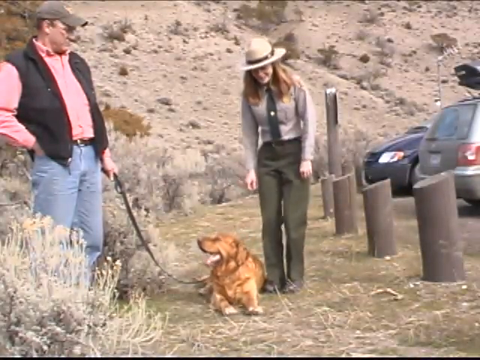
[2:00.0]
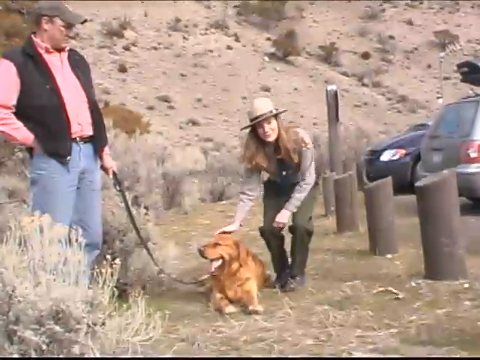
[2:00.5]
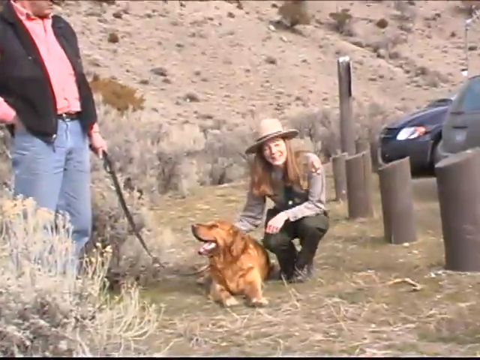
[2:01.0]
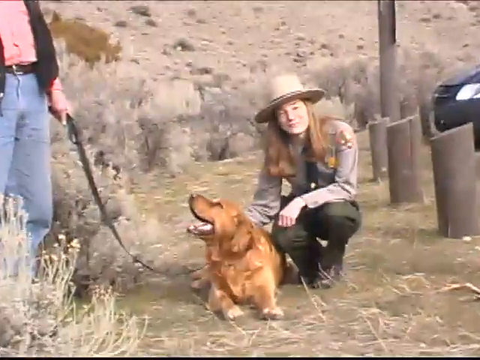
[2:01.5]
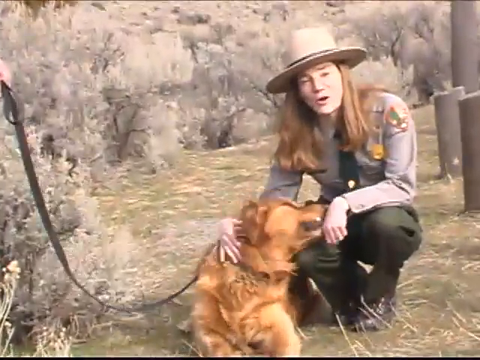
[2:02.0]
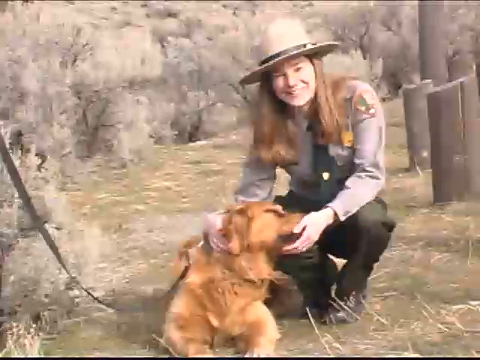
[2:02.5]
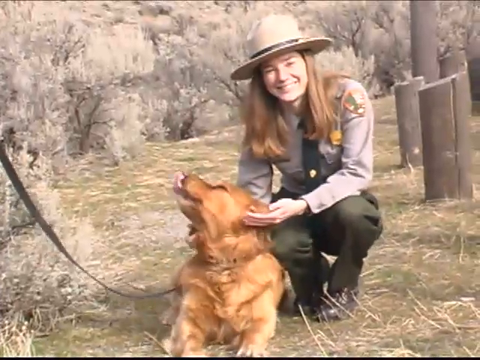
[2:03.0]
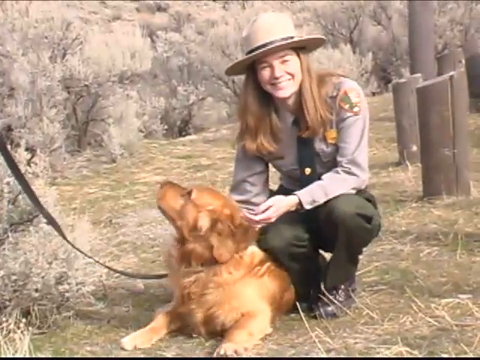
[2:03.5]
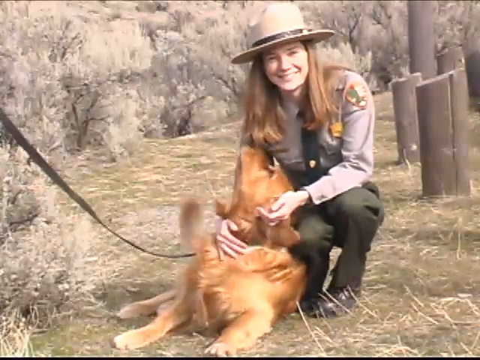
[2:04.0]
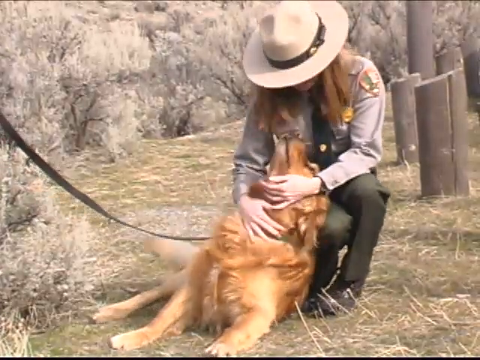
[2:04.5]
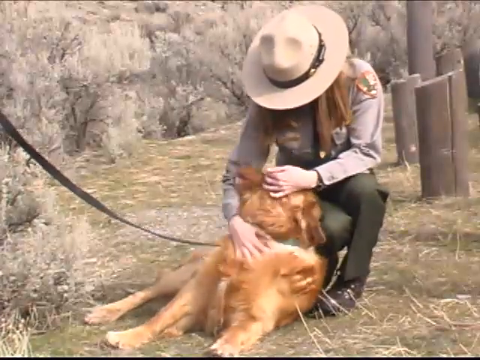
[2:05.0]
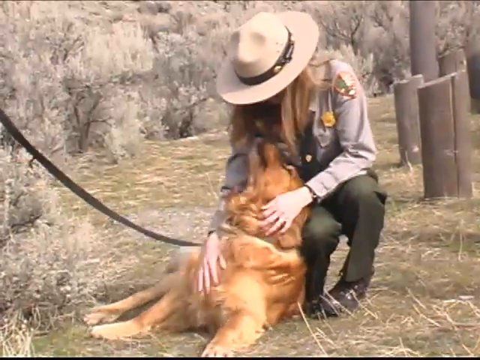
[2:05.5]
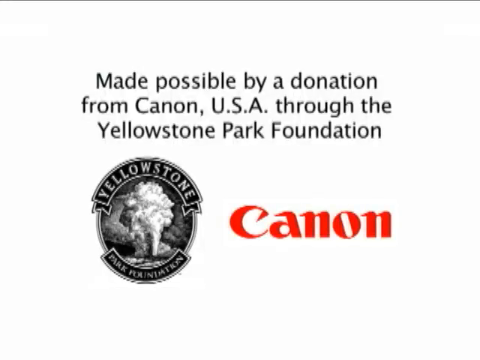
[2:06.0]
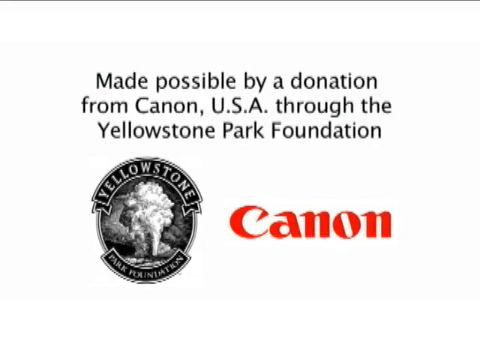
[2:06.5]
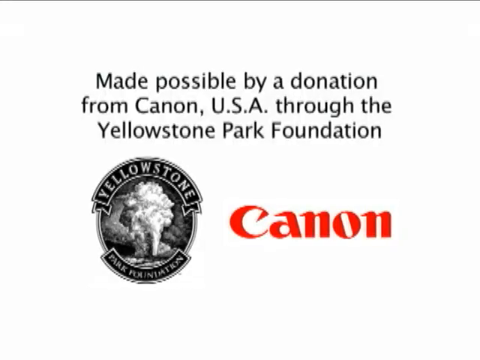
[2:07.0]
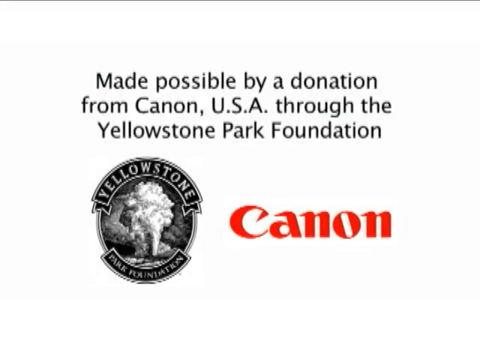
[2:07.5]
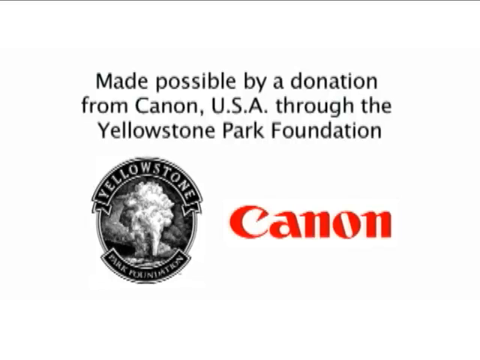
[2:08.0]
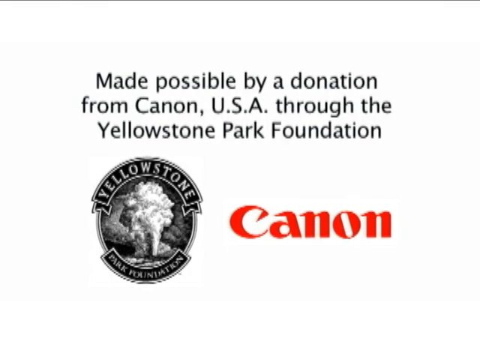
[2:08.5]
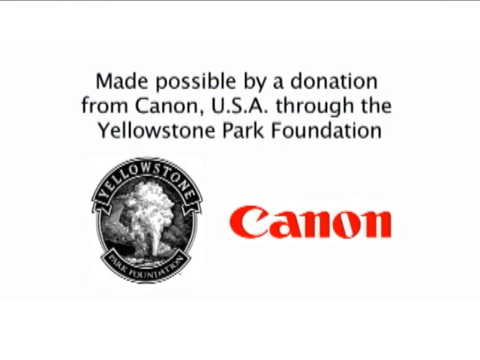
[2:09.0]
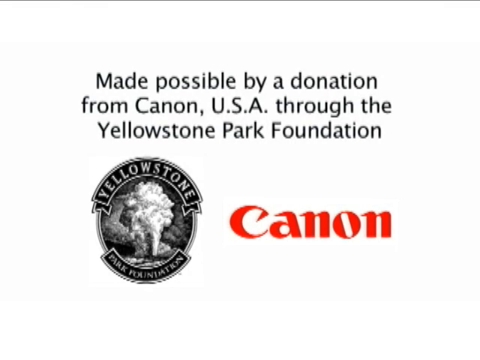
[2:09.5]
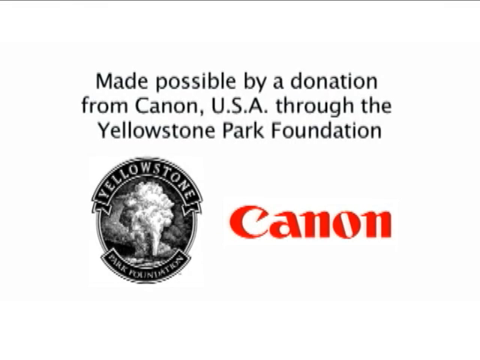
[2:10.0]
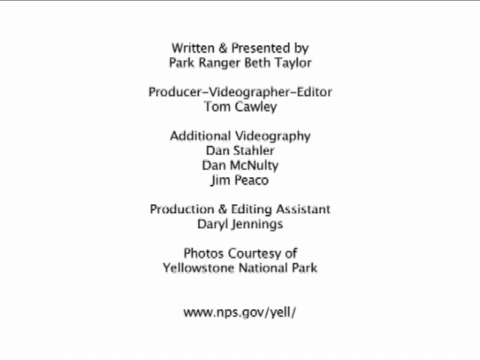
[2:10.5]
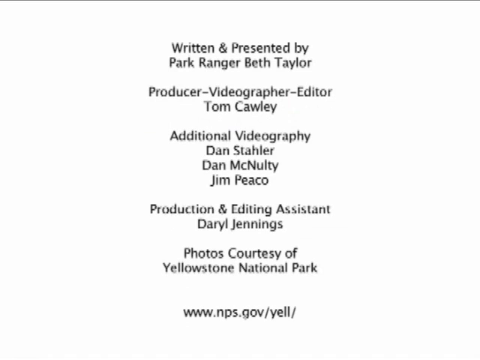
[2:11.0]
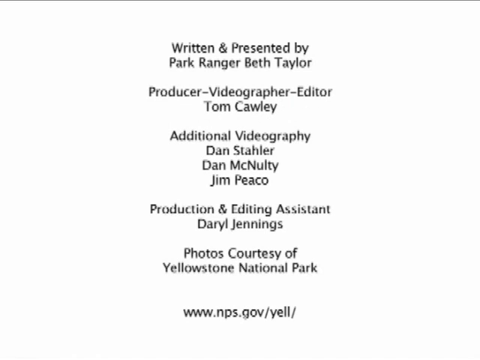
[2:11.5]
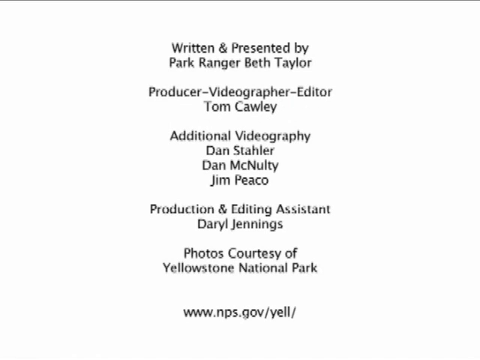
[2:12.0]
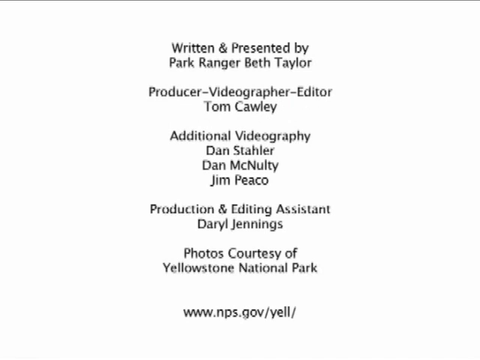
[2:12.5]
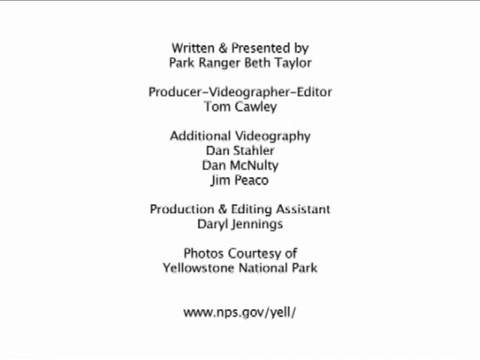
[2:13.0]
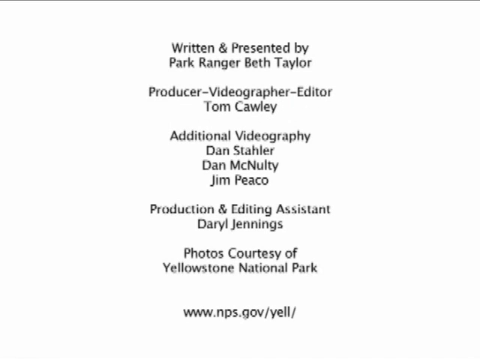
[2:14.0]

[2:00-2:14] Beth Taylor is in the middle of the screen in her full park ranger uniform, standing beside a parking lot with two cars in it in Yellowstone National Park, with a man in a pink button-up shirt to her side. Beth bends down and starts petting the dog, which looks lovingly at her, and she continues petting it. The scene is replaced by a white background with black letters reading "made possible by a donation from Canon USA through the Yellowstone Park Foundation." Underneath, the Yellowstone Park Foundation logo is on the left and the Canon logo, written in red, is on the right. This is replaced by a white background with black lettering showing the credits and the website "www.nps.gov".